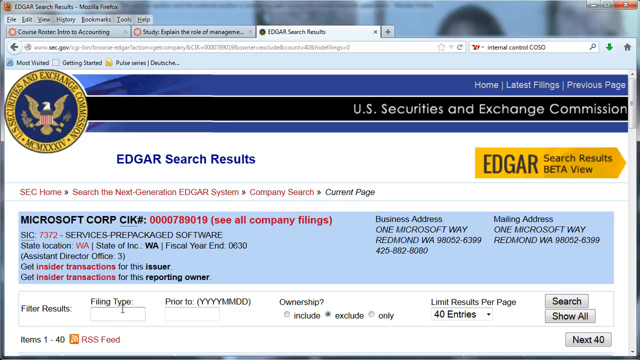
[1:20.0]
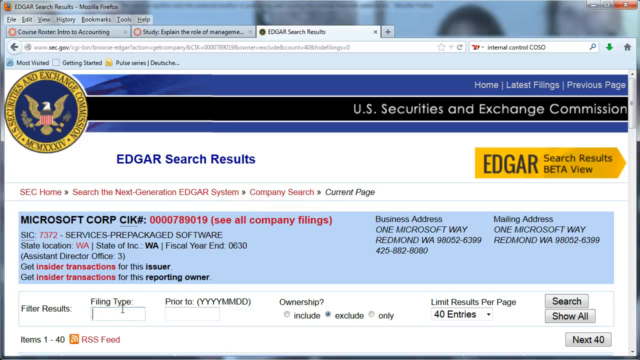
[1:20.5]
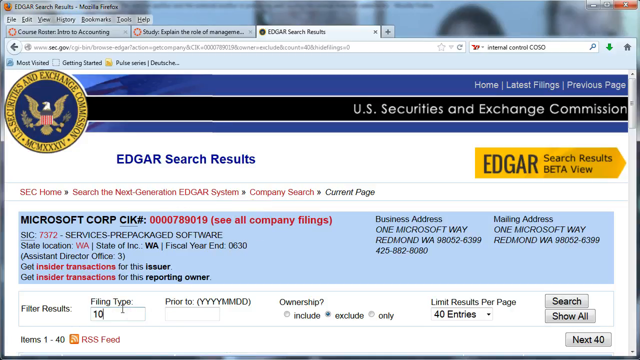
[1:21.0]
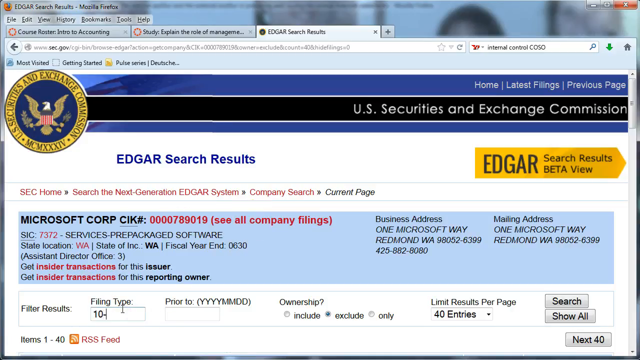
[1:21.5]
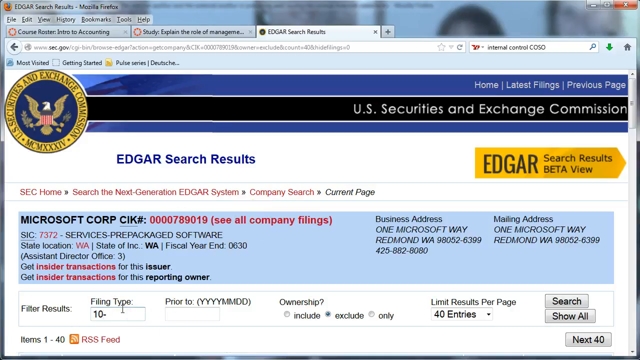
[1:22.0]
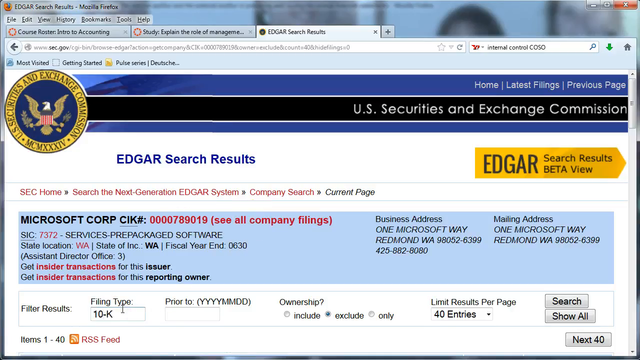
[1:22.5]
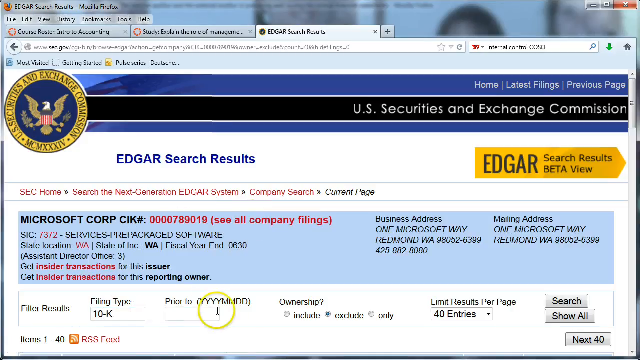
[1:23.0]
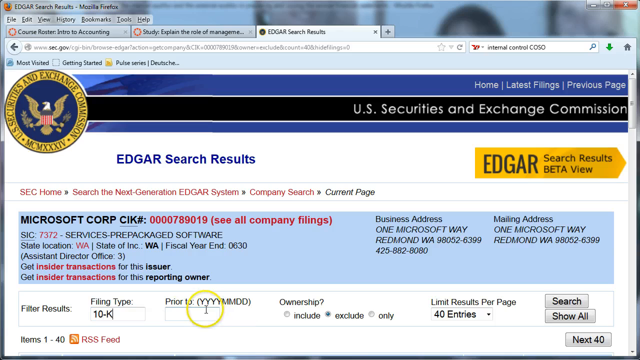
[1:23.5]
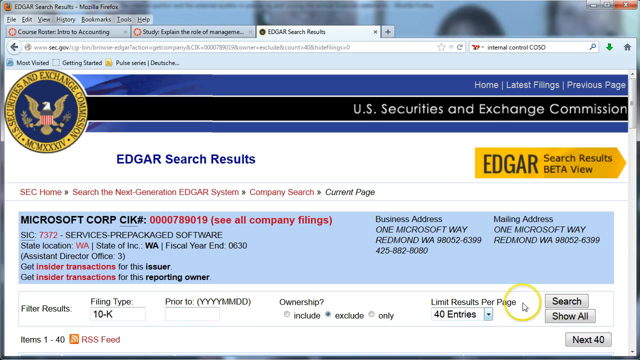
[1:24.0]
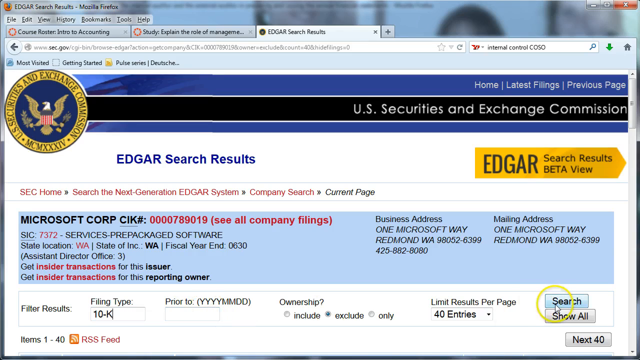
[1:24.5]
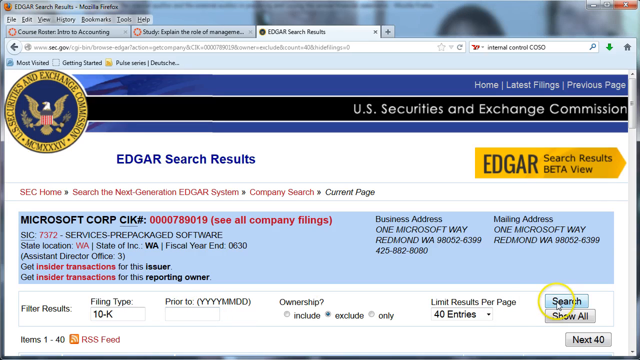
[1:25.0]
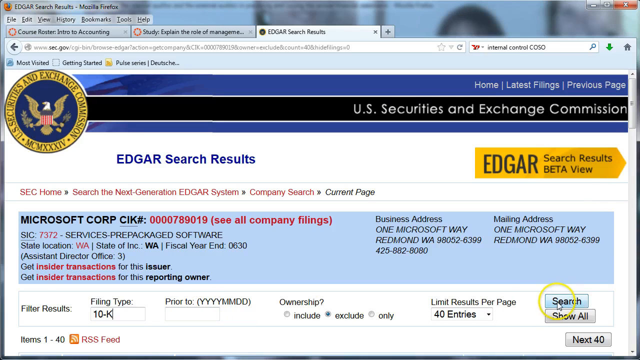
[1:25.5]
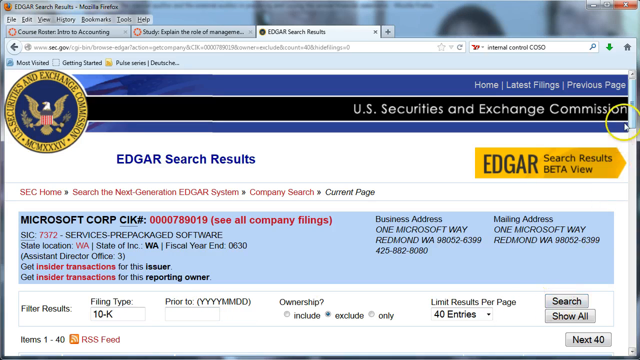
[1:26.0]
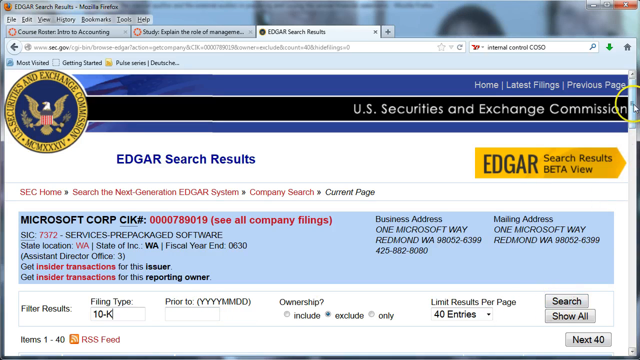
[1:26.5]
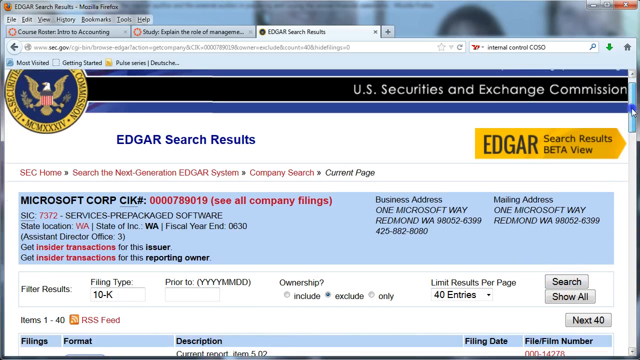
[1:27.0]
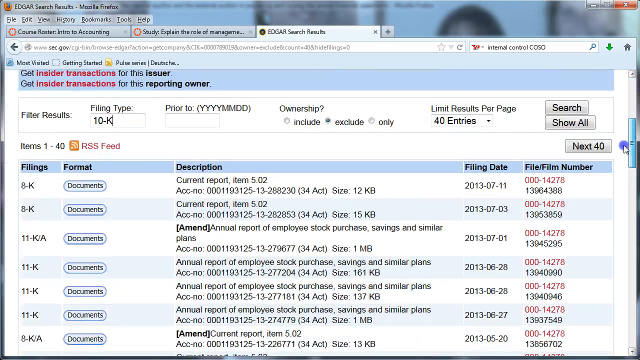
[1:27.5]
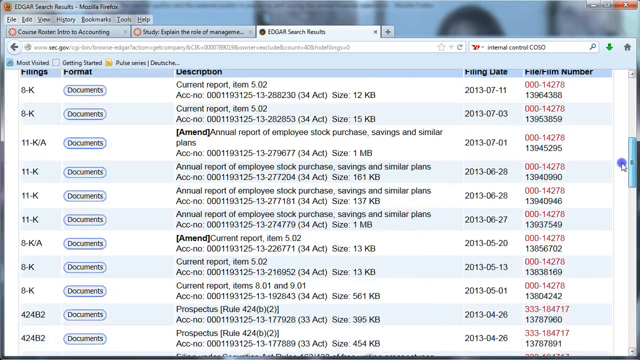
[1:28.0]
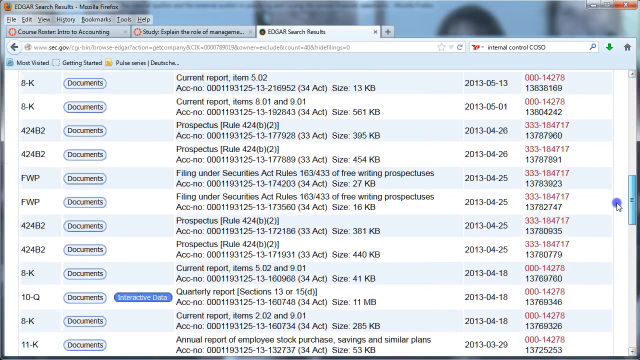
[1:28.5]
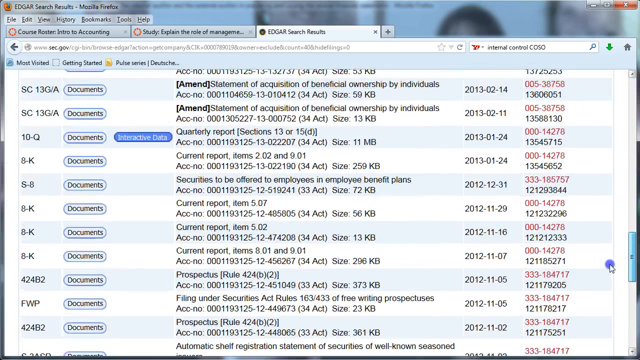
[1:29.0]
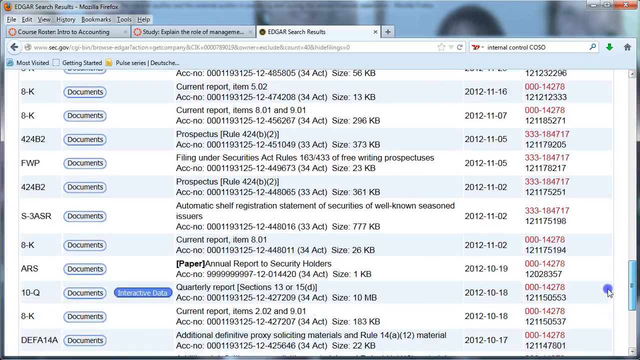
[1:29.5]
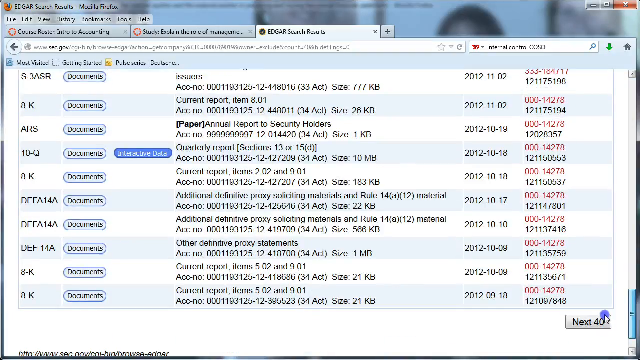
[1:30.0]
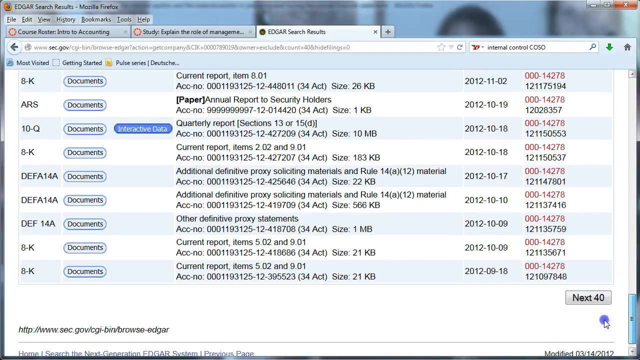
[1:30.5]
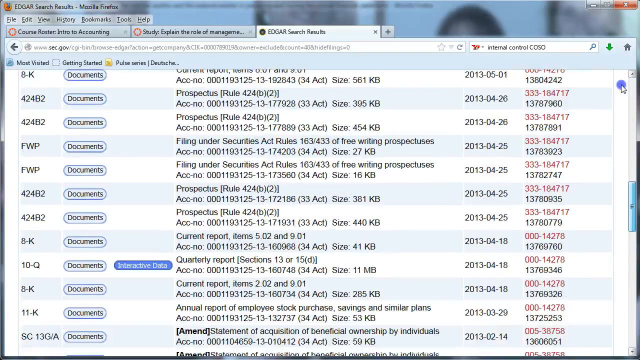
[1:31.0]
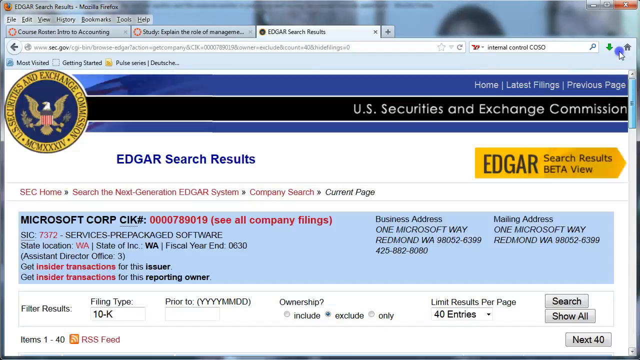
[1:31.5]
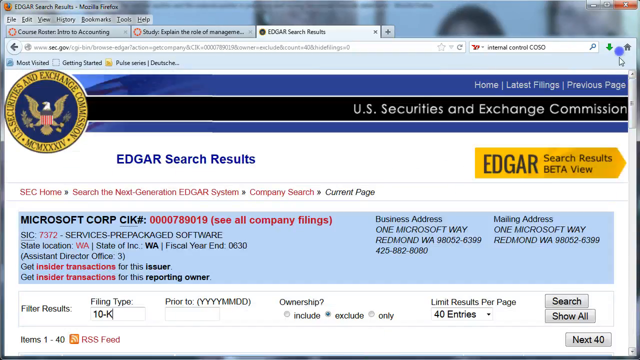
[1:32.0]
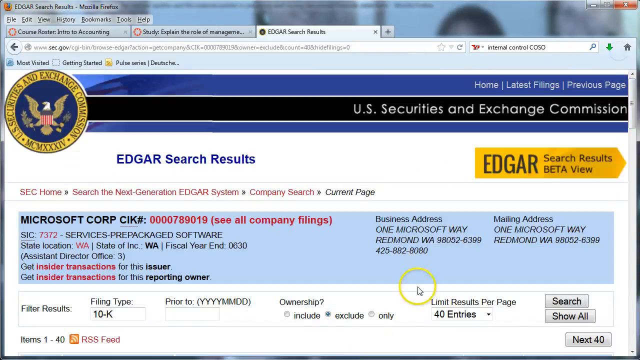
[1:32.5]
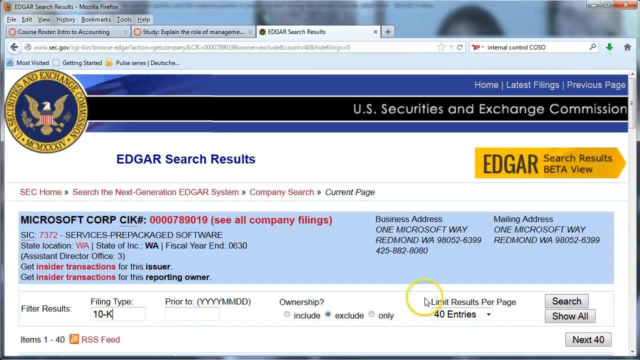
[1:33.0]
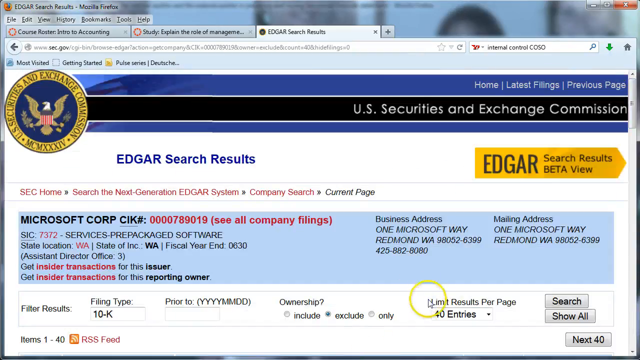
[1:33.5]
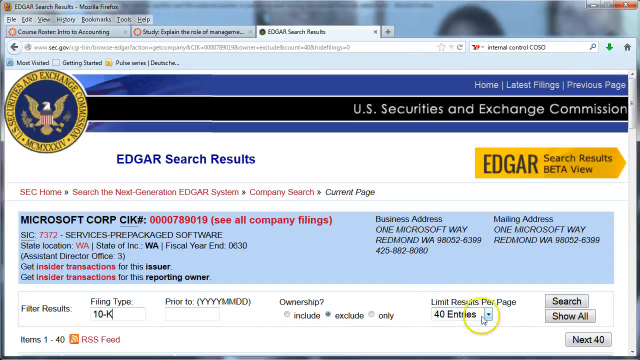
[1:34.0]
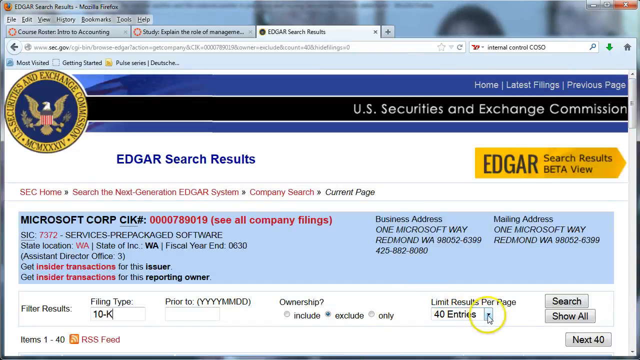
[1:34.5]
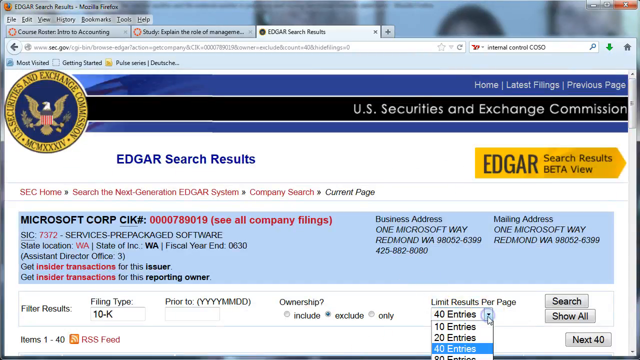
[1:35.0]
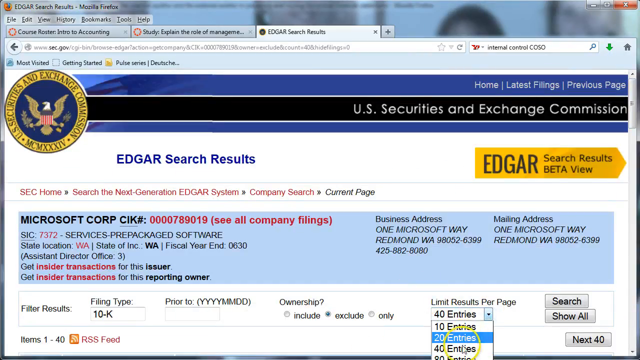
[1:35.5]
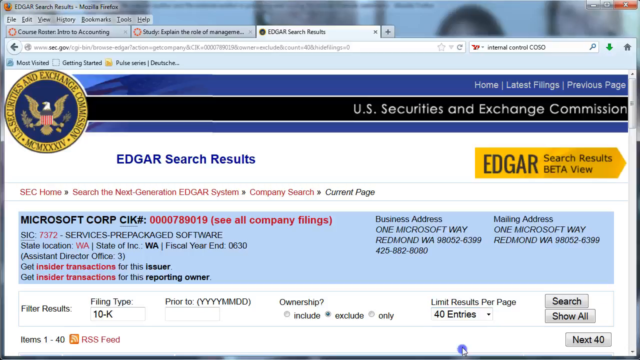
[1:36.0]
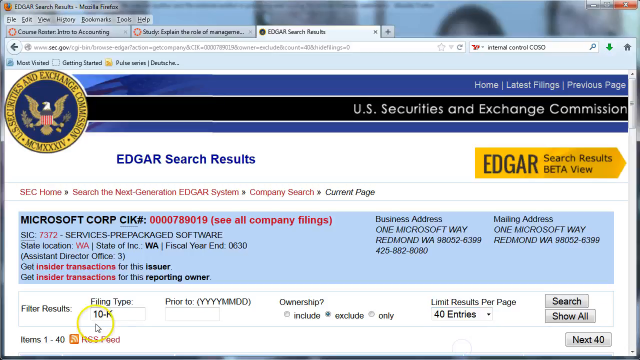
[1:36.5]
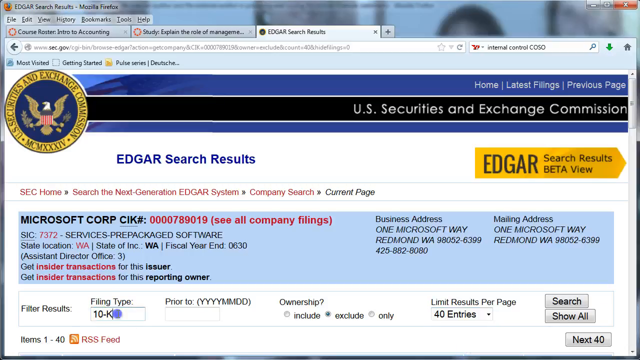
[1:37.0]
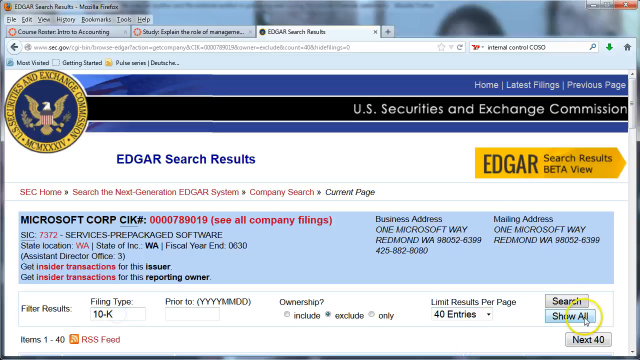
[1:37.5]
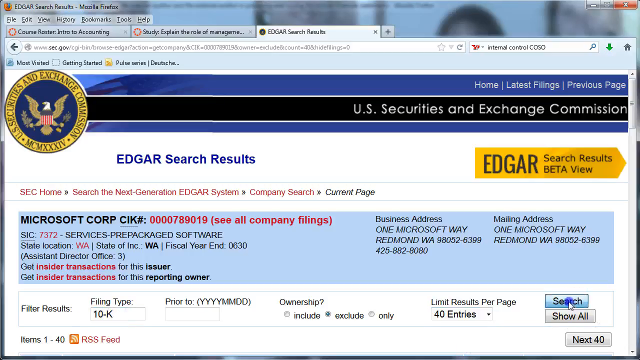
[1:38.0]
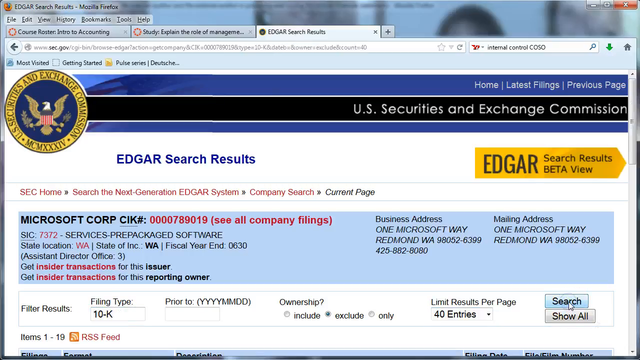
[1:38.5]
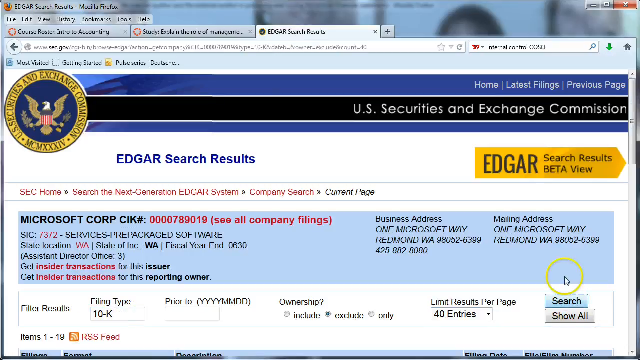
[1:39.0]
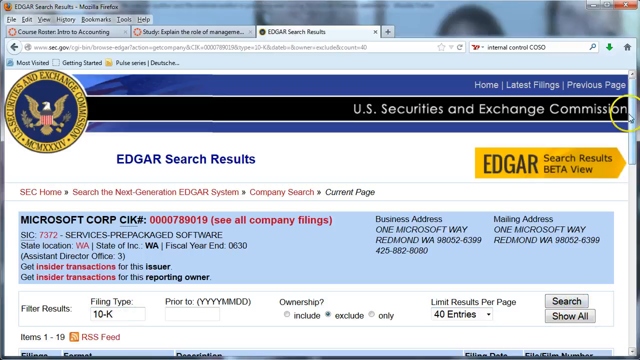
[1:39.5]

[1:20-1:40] The company search results show Microsoft Corp, along with its CIK number and other information such as an SIC number. The user clicks on the second red CIK hyperlink, then on the red hyperlink "see all company filings". The Microsoft Corporation page that opens shows a business address and a mailing address, plus fields for filtering results: filing type, prior to date, and ownership. The user types "10-K" into the filing type box and clicks the search button, and a list of Microsoft filings appears. There is also a results-per-page option, currently set to 40 entries.